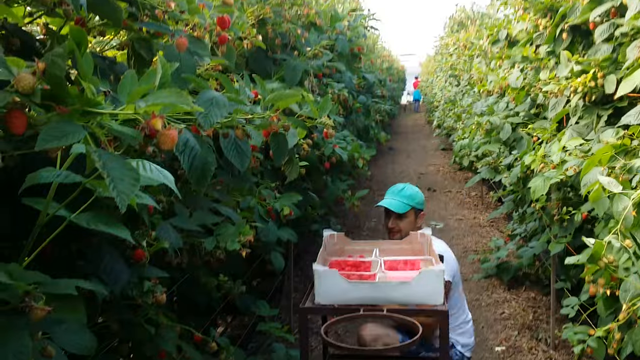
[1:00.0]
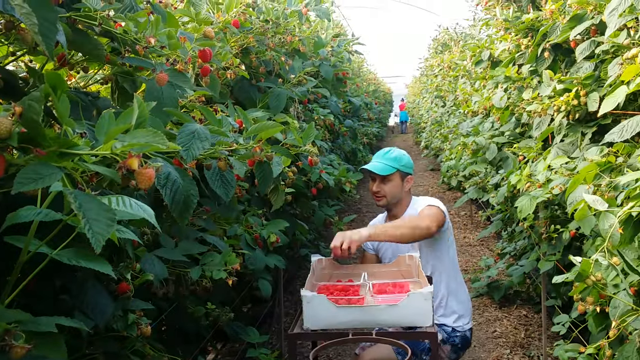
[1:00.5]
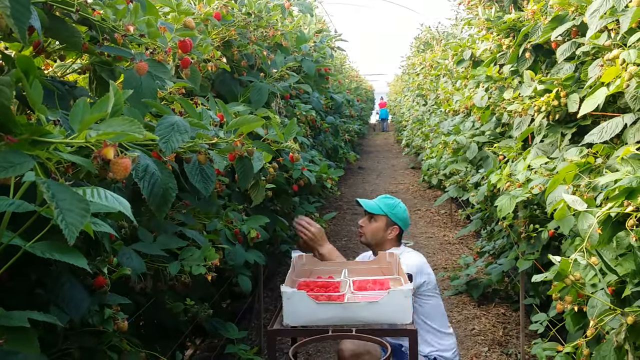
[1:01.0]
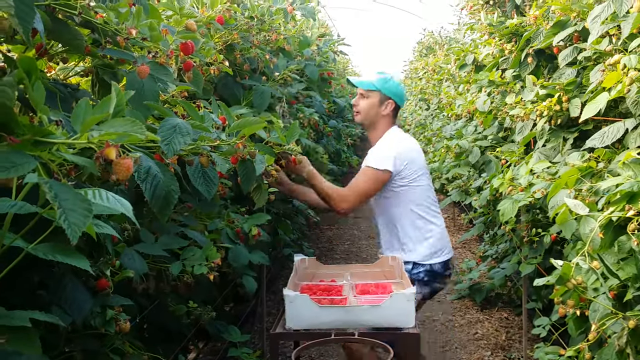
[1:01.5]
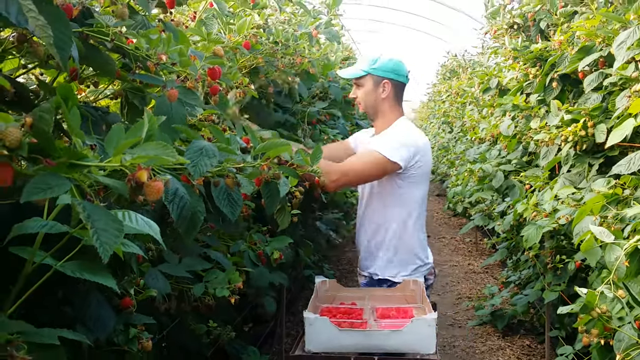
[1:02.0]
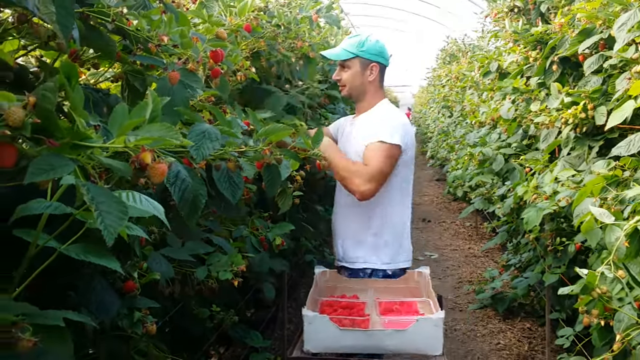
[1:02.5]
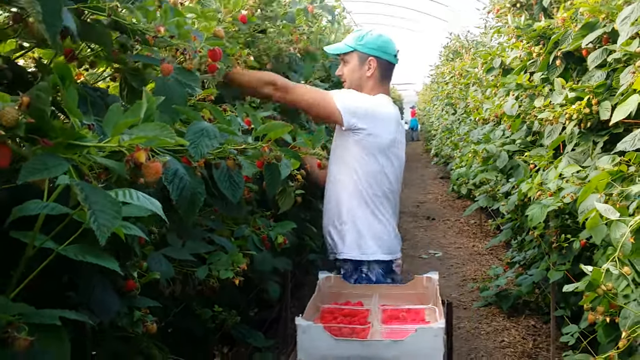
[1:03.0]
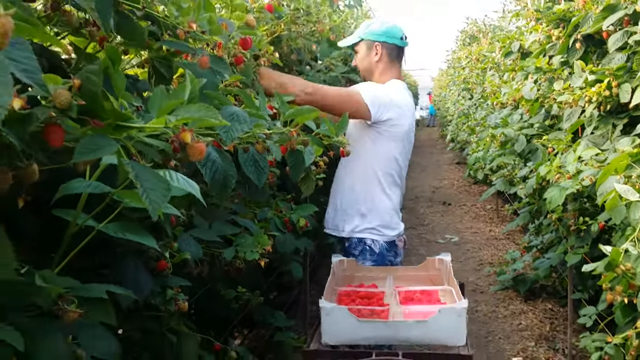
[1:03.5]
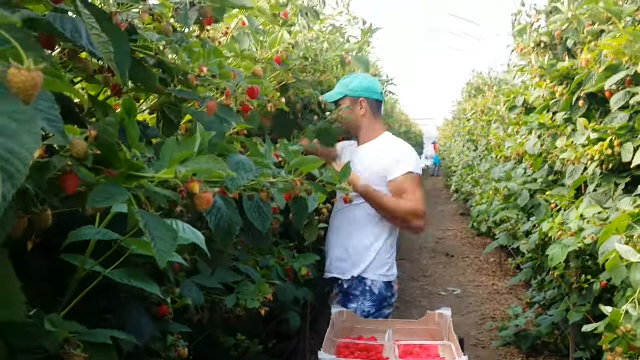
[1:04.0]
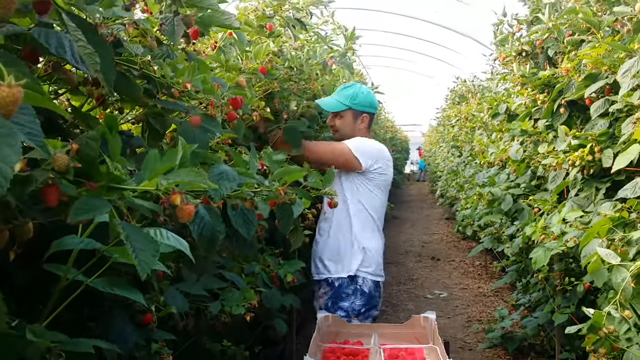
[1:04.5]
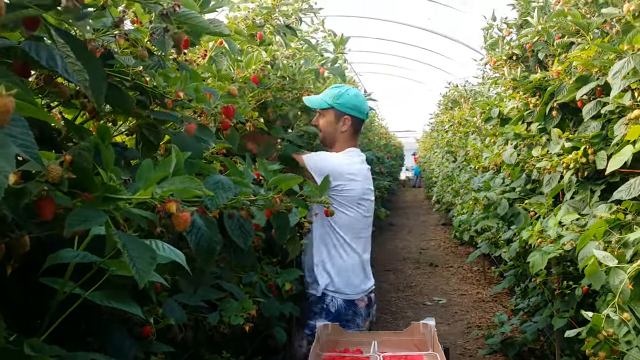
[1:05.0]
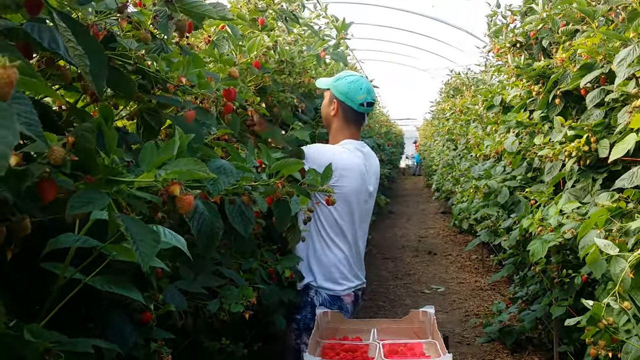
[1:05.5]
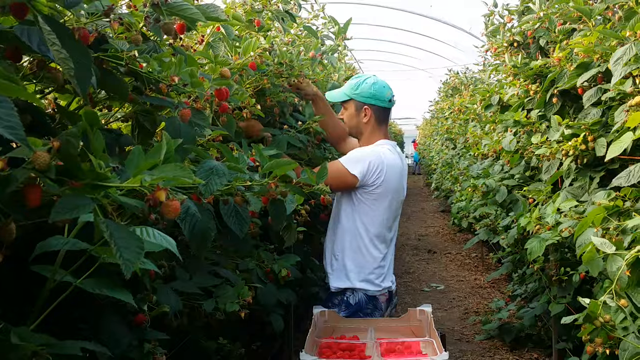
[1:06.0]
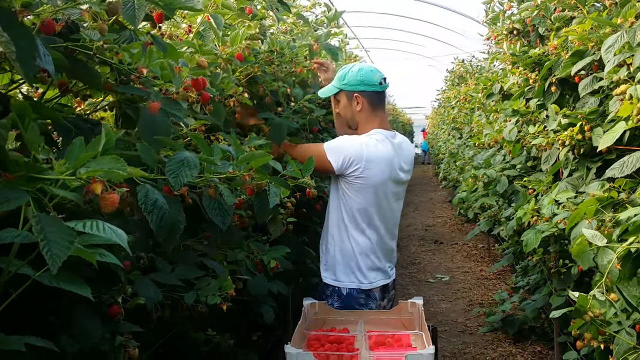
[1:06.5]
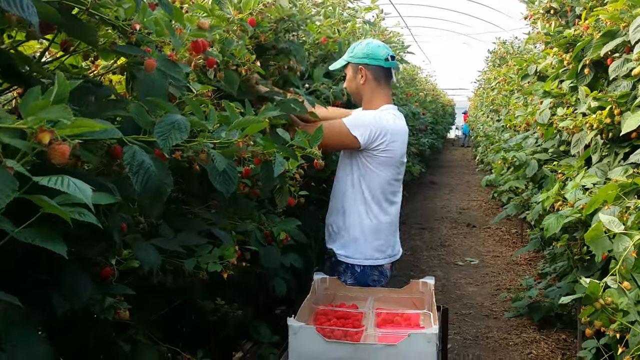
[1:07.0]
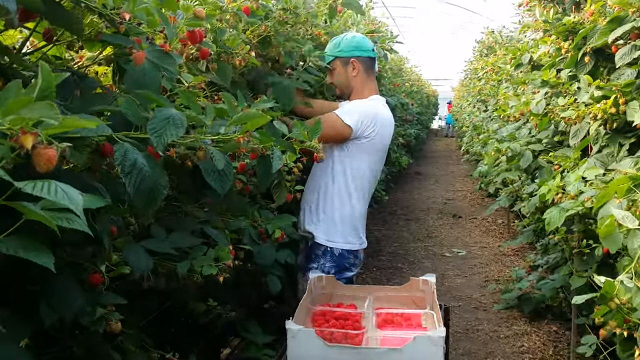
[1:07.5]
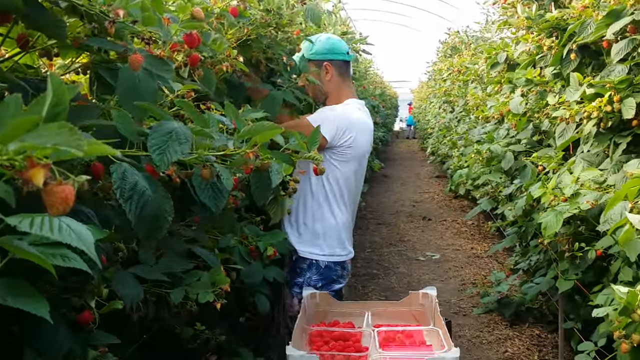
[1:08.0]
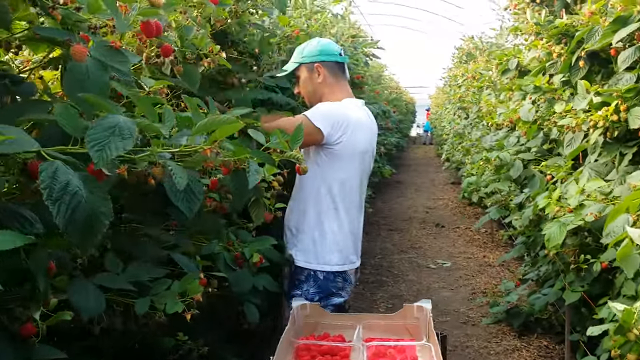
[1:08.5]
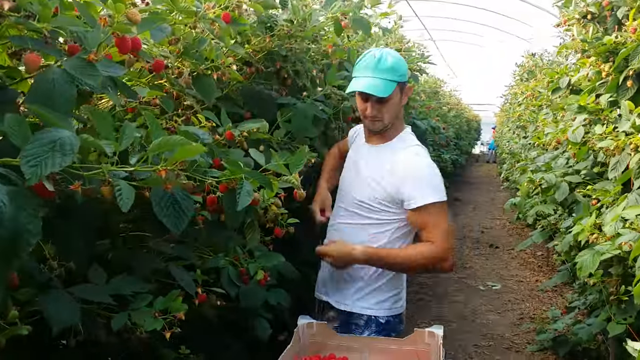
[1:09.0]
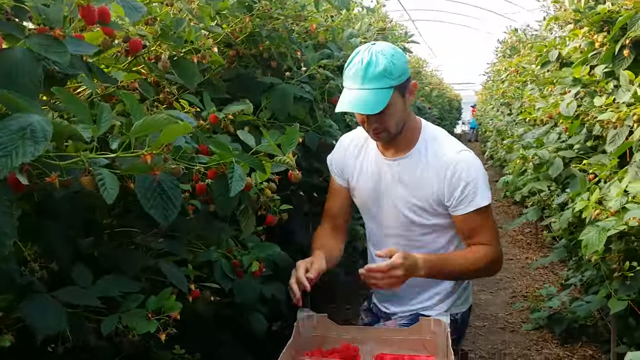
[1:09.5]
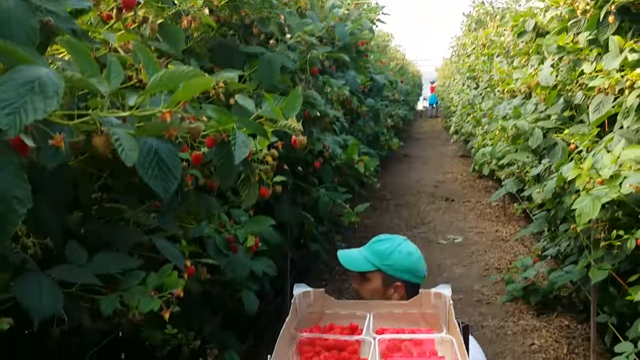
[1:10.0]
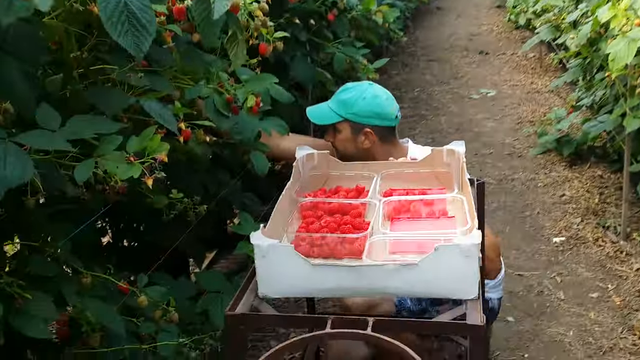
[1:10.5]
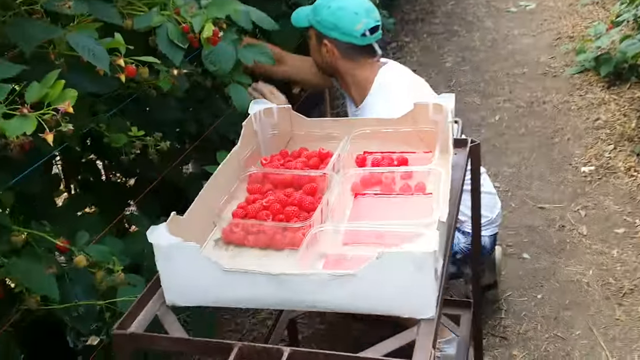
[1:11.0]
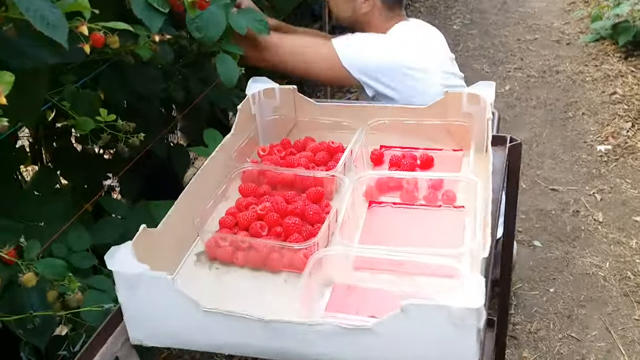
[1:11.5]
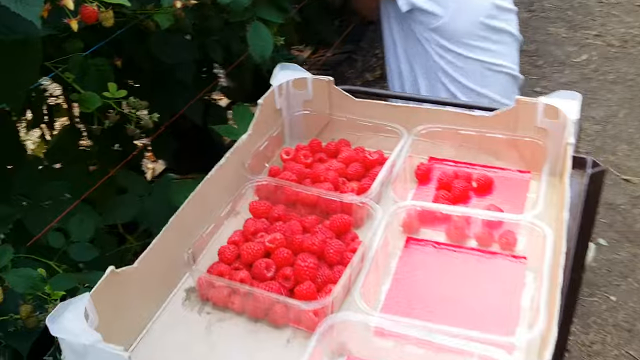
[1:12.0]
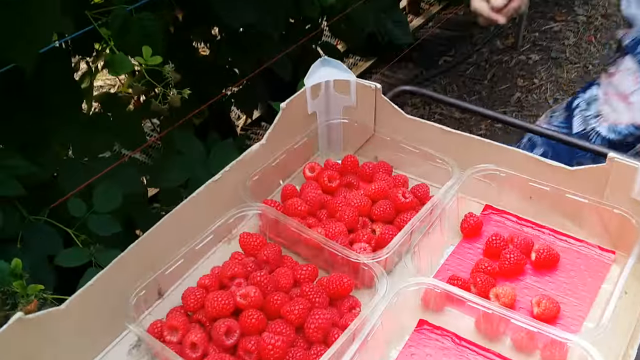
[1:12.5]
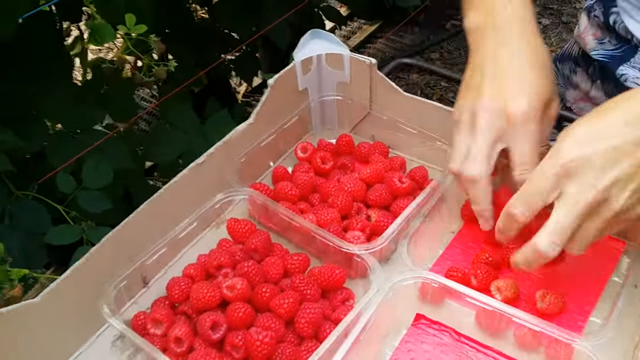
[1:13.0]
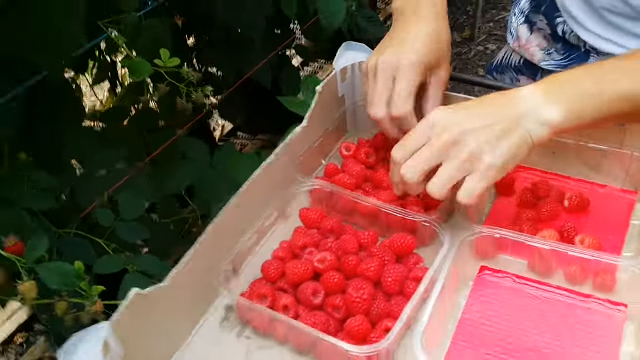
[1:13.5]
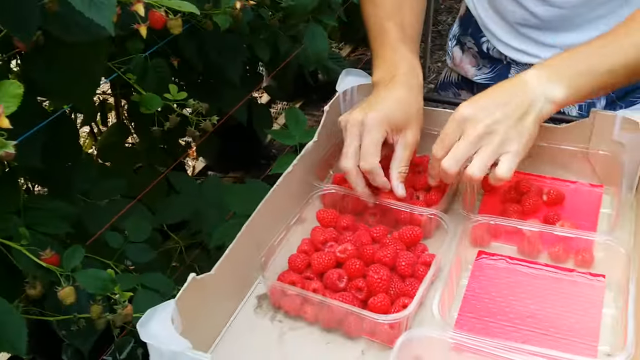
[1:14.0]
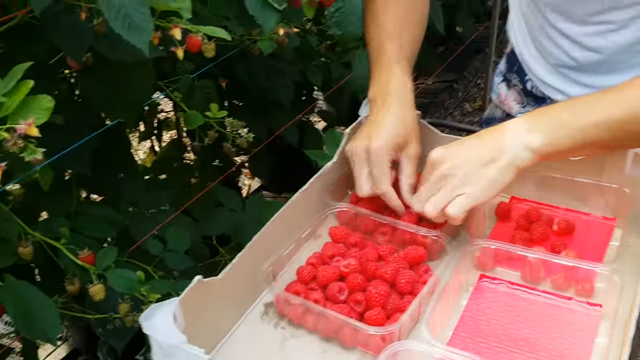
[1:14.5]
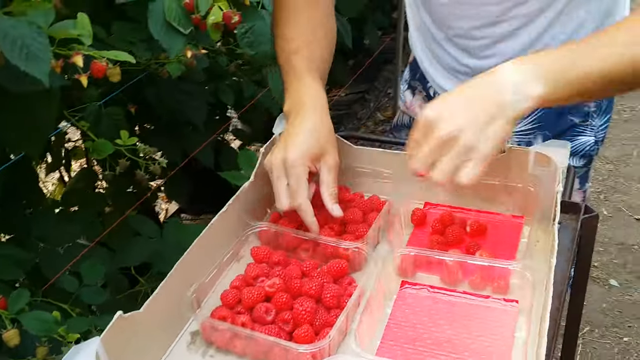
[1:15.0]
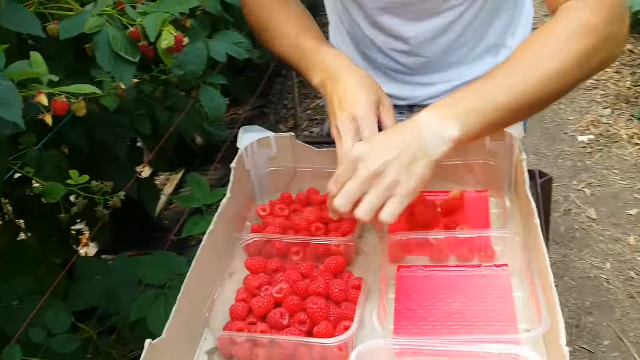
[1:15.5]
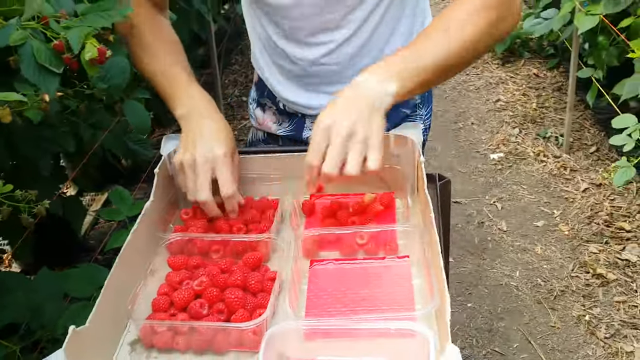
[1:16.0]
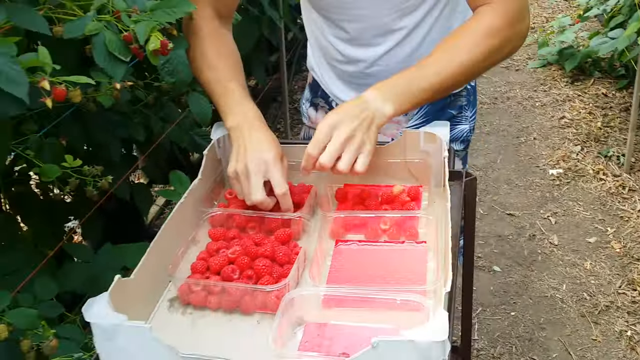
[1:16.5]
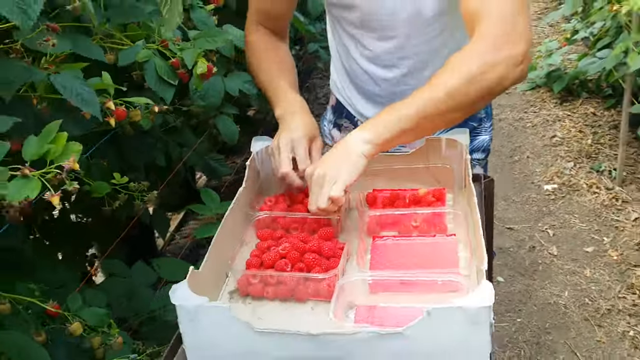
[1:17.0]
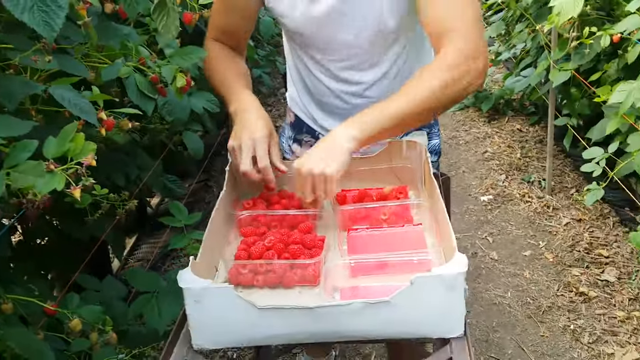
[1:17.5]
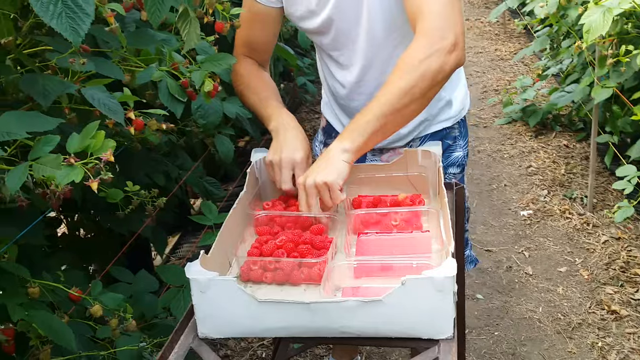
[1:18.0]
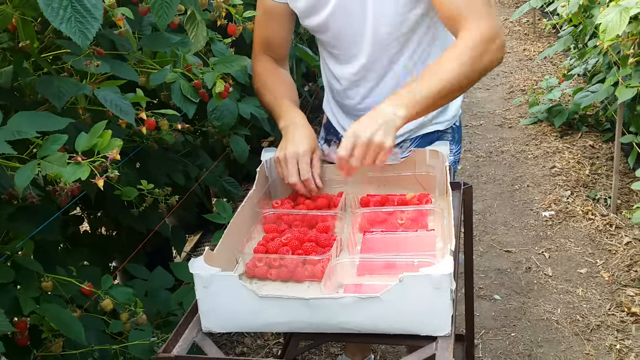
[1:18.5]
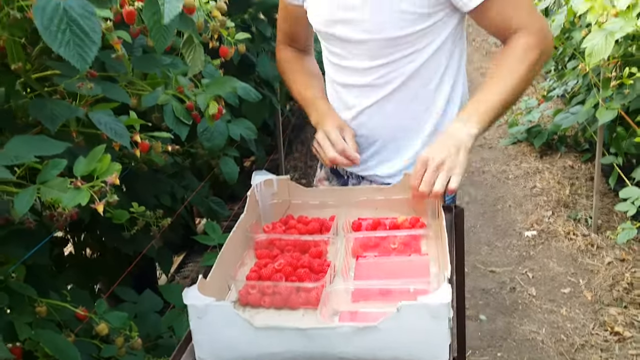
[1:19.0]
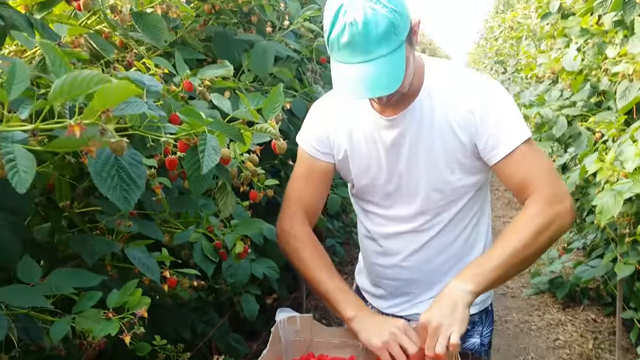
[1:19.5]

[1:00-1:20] The man picking the raspberries wears a light mint baseball cap, a white short-sleeved t-shirt, and floral shorts with pink and white flowers and blue leaves, and he has light brown tan skin. As he bends down, apparently a woman can be seen all the way down at the end of the bushes, working on the other side: he is on the left side and she is on the right. He picks more raspberries at the lower level, dumps them into the clear bins, and picks more. The camera zooms in as he bends down, showing him taking some raspberries out of the clear bin at the front on the left side and putting them in on the right side.